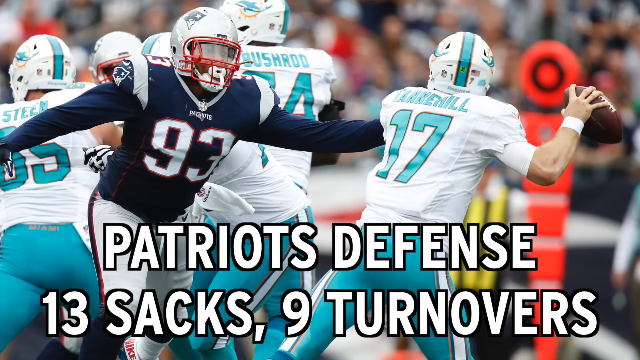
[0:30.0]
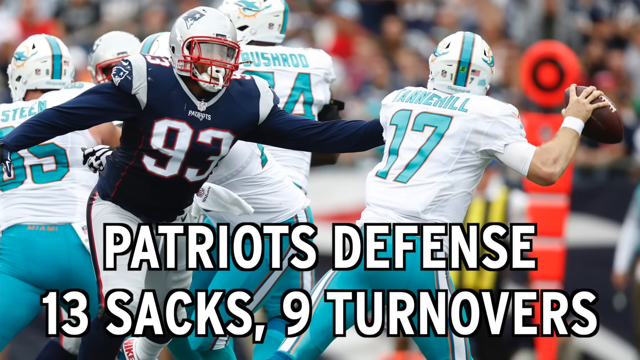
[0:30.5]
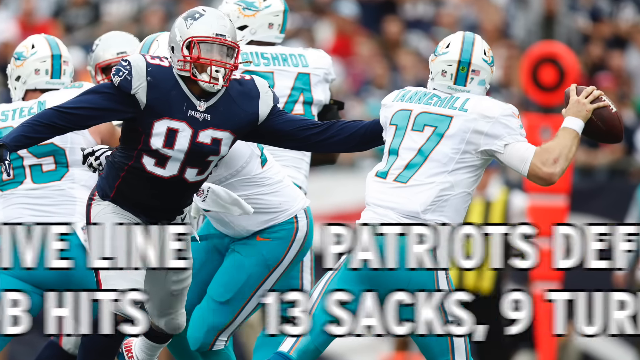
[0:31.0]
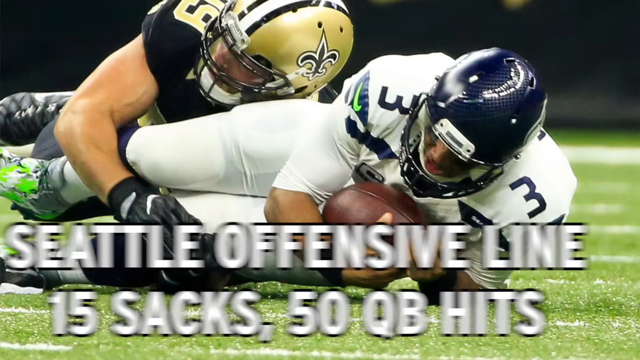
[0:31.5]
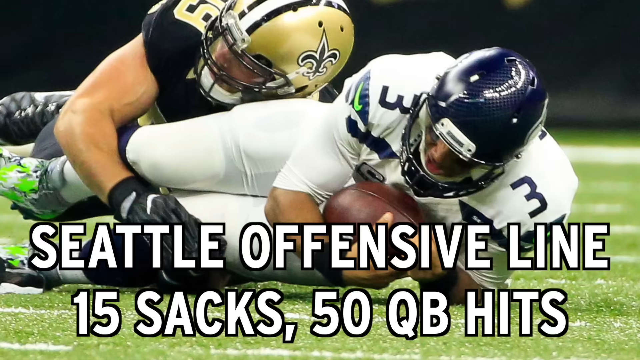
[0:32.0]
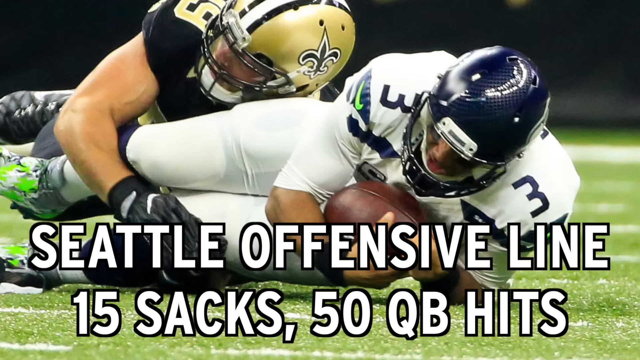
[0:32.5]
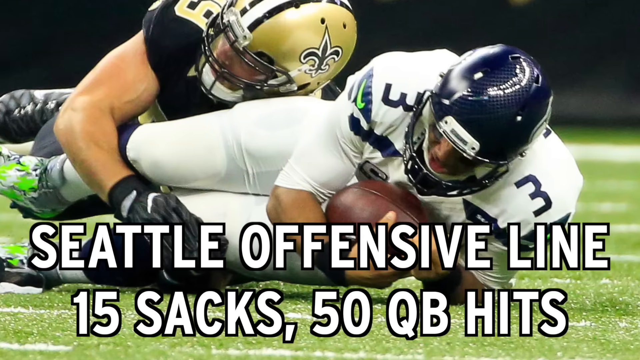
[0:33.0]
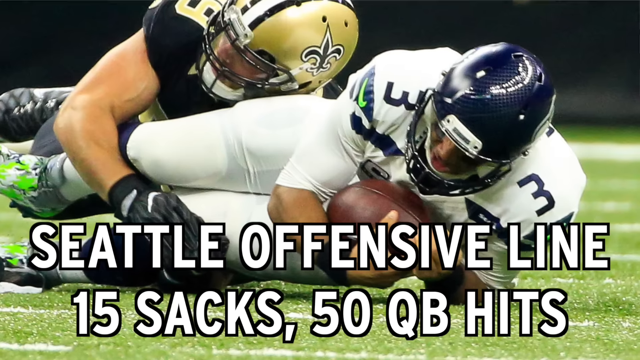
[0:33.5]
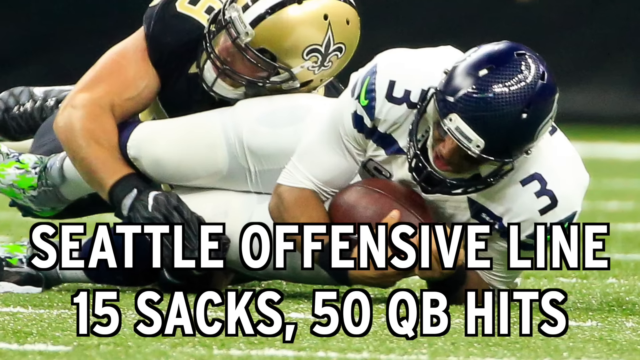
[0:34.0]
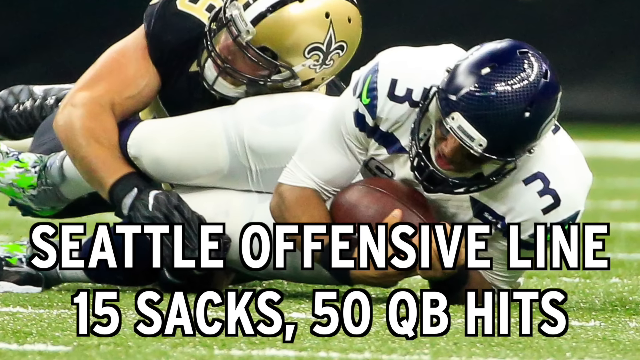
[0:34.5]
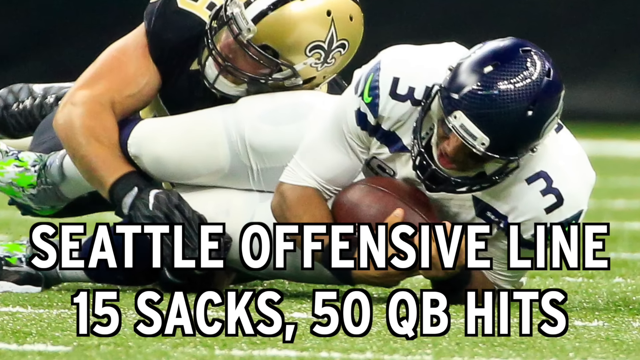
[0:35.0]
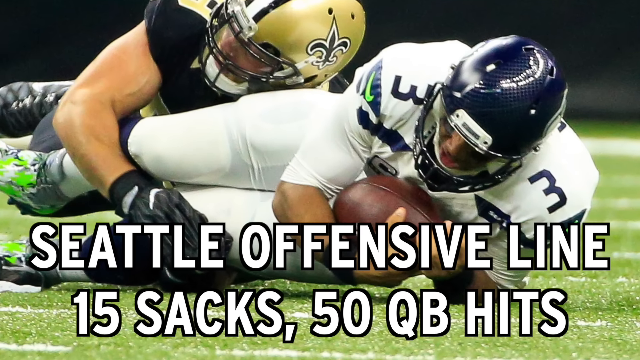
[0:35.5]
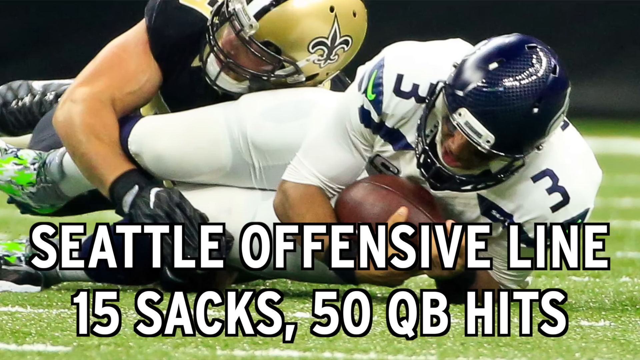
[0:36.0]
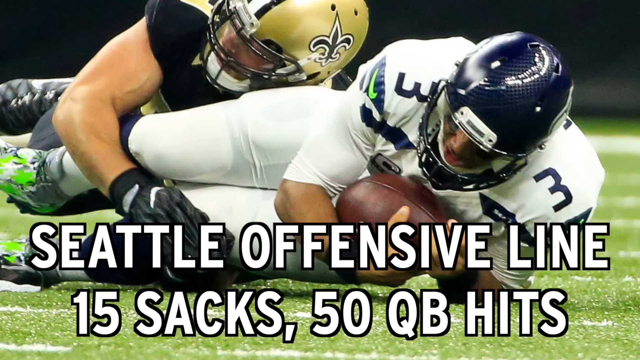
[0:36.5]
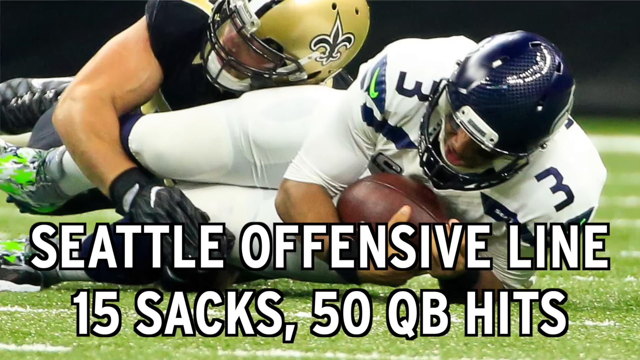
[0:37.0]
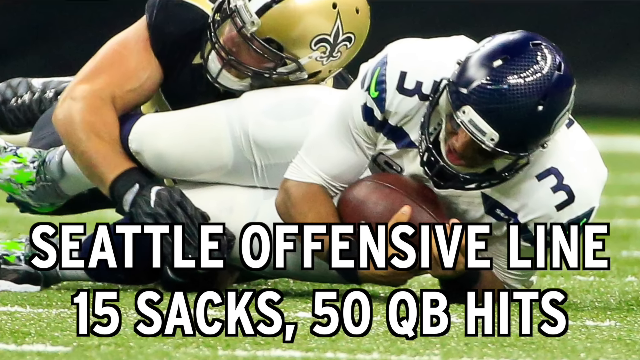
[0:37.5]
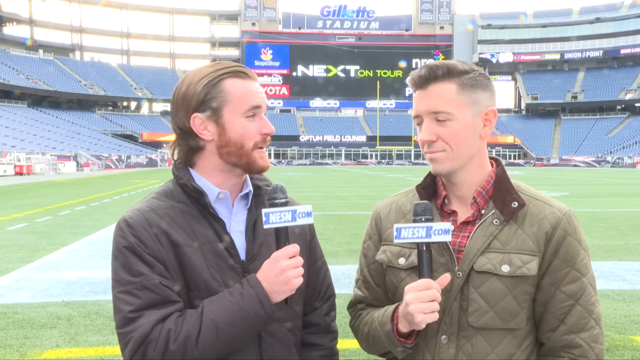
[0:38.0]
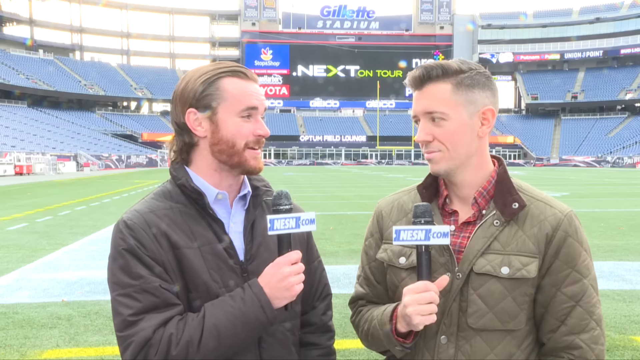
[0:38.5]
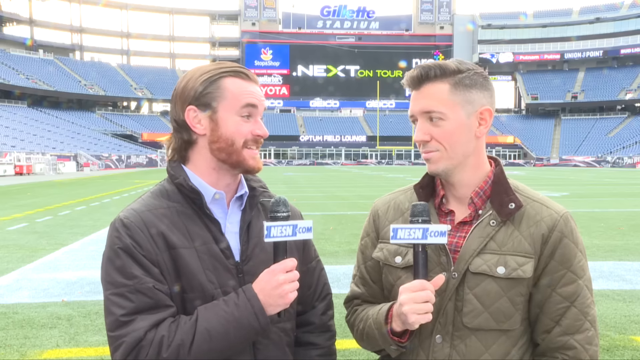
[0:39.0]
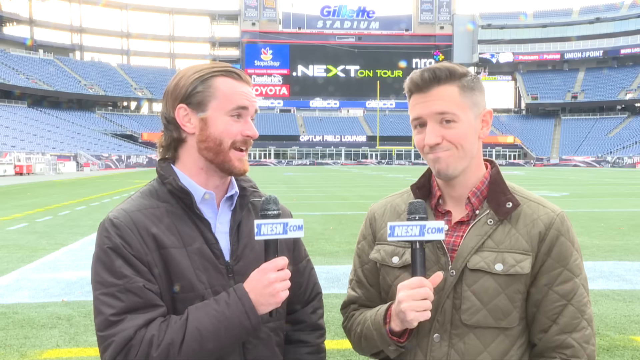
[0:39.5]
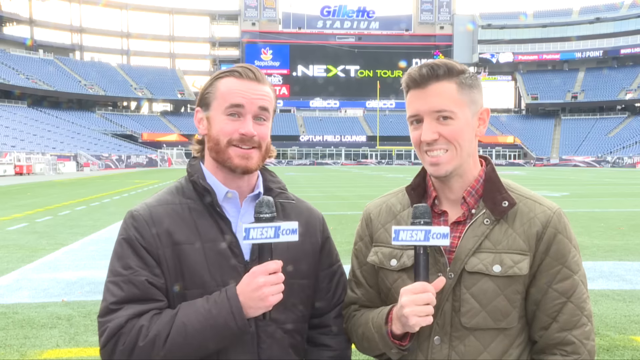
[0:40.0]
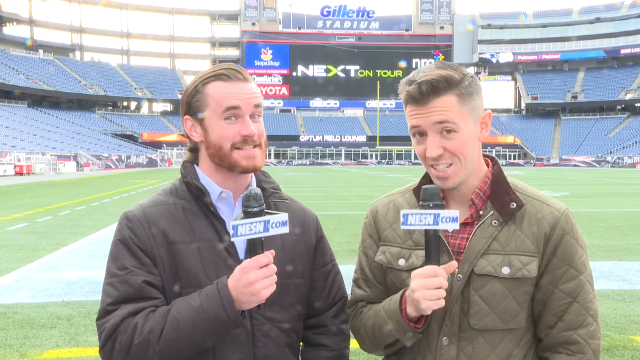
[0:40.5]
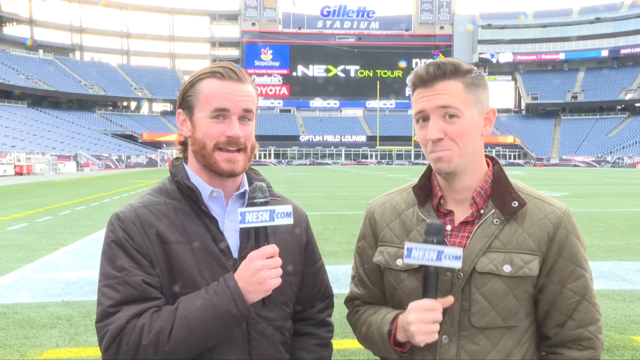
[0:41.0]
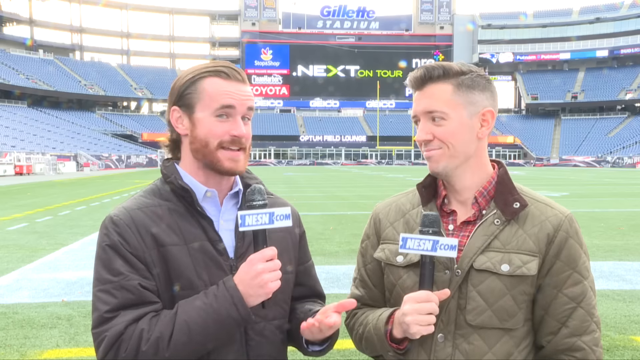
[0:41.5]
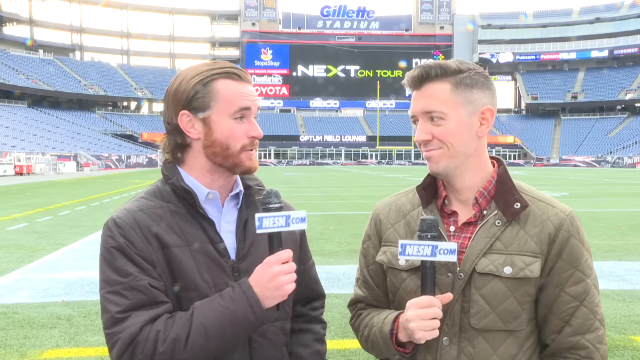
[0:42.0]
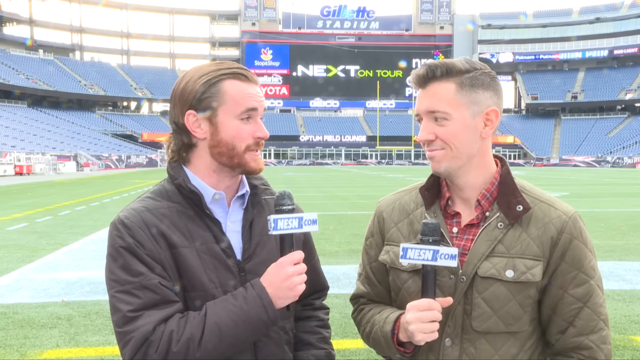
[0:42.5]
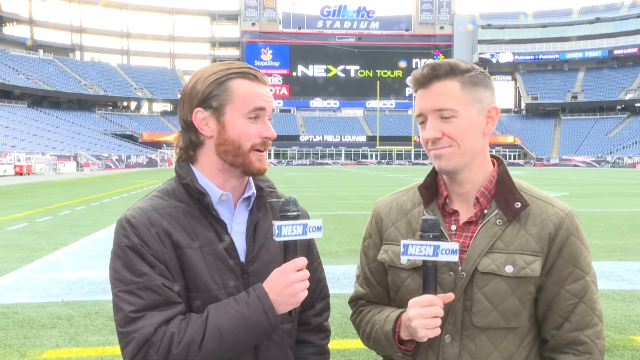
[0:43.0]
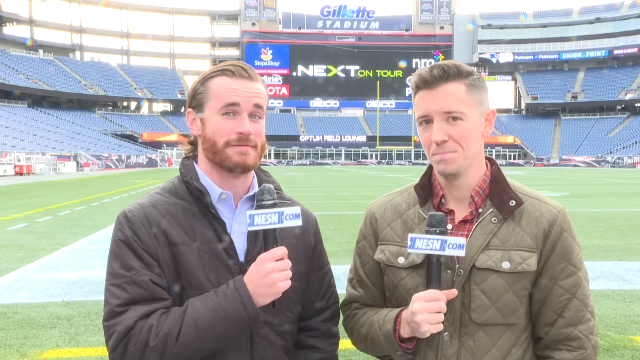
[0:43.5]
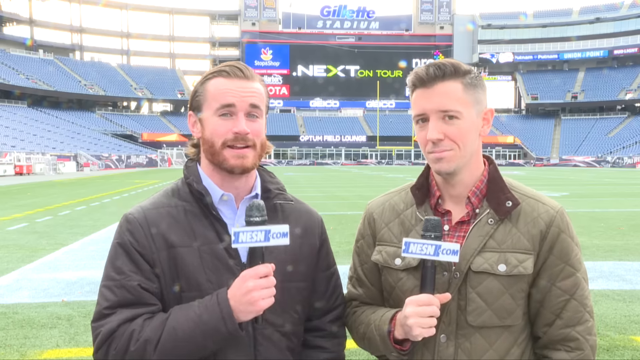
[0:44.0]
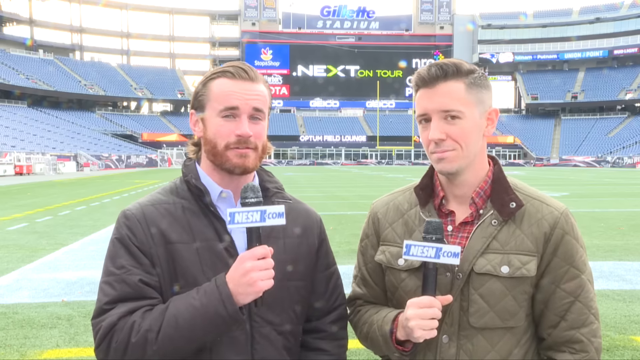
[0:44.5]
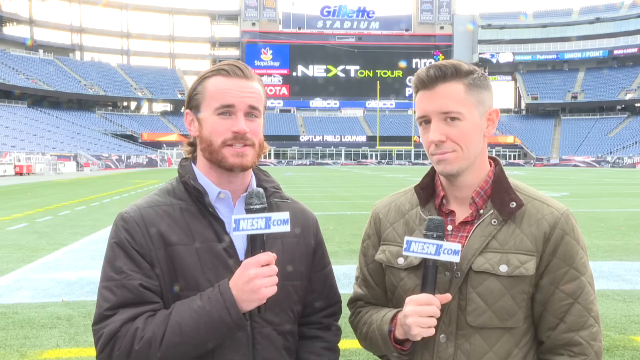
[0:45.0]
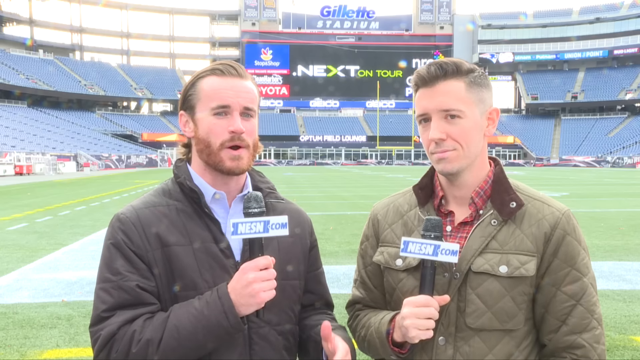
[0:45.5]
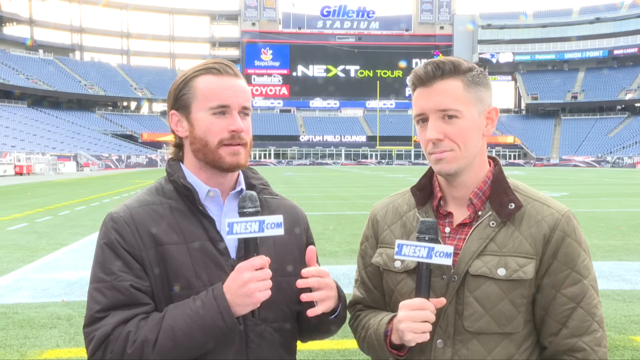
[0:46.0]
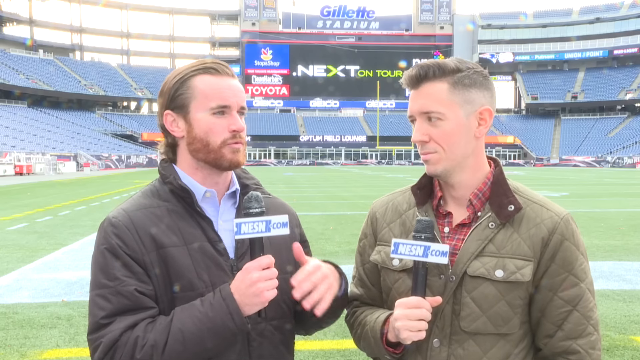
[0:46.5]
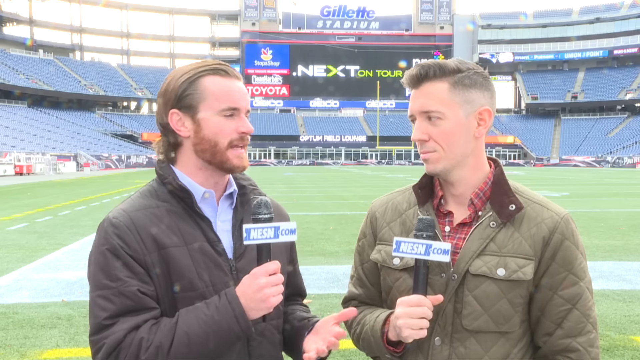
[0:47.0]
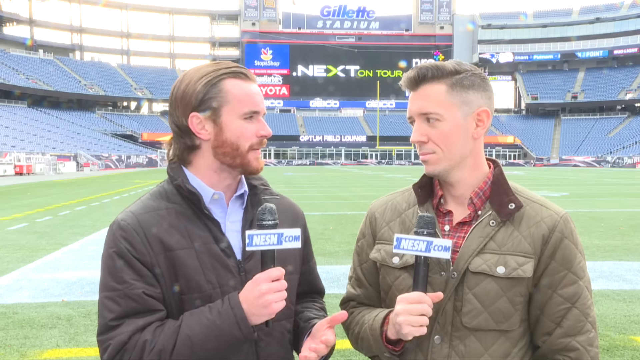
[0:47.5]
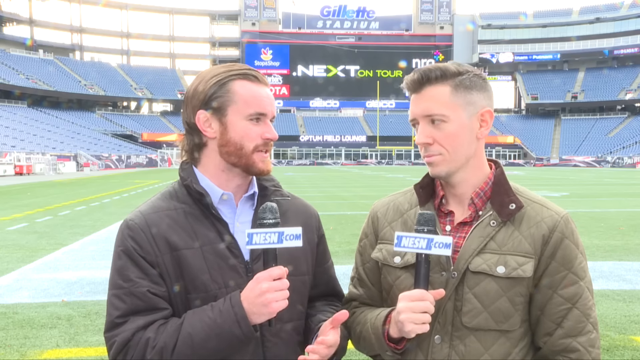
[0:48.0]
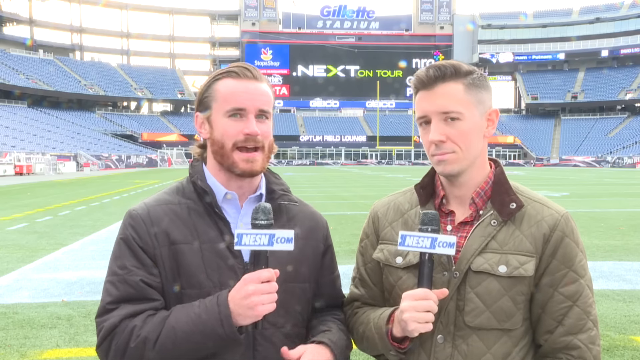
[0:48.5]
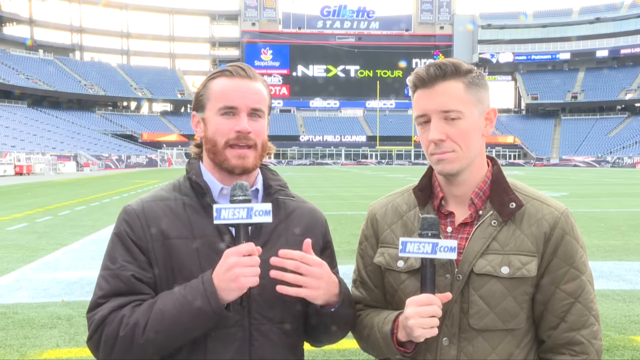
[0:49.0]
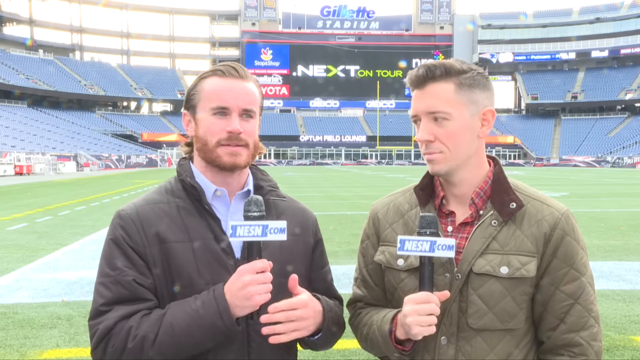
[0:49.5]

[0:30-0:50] Clips of games alternate on screen: the first shows something about the Patriots, and the second reads "Seattle offensive line, 15 sacks, 50 quarterback hits." Two sportscasters then appear, speaking into microphones with "NESN" on the microphone box. They take turns talking, gesture with their hands and look at each other. They stand at the base of a stadium with a football field behind them; the stadium is Gillette Stadium. Sometimes they shrug their shoulders at the same time. A sign behind them reads "next up on tour," and a red Toyota sign is next to that big black screen. The stadium seats go up high, and the stadium is completely empty.